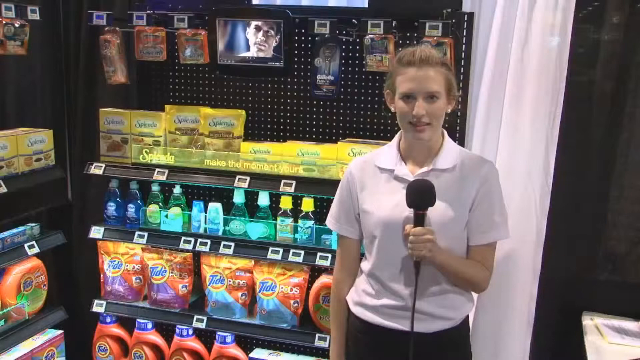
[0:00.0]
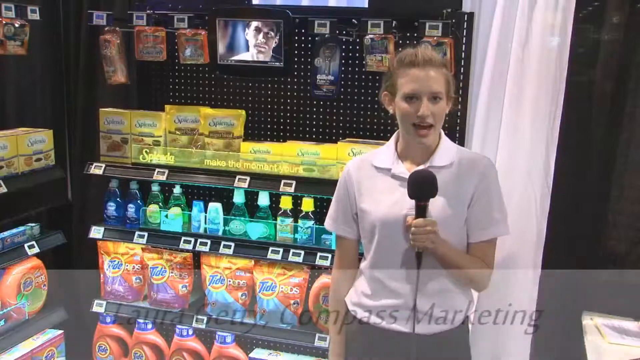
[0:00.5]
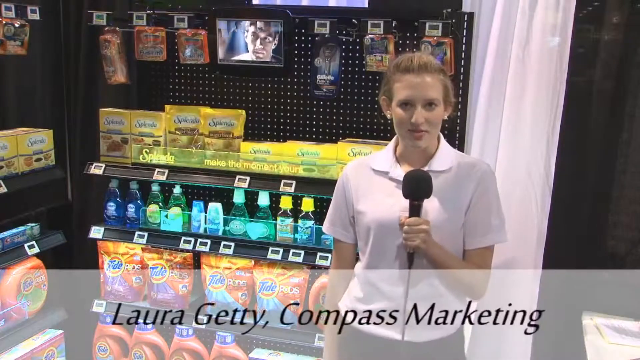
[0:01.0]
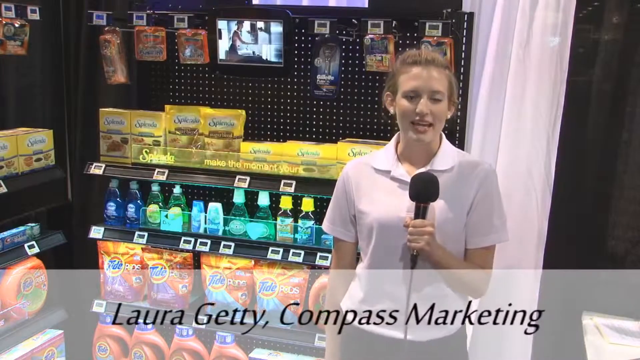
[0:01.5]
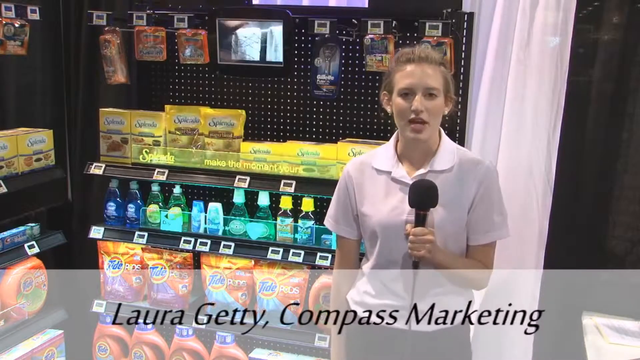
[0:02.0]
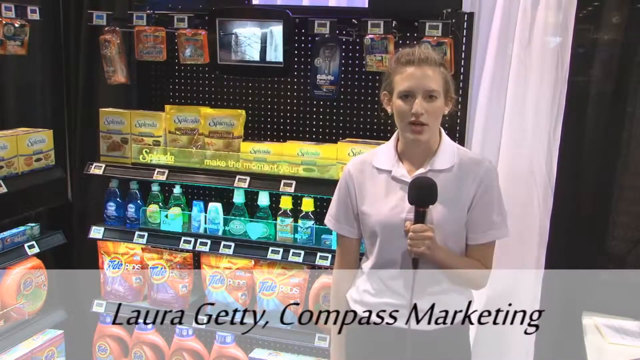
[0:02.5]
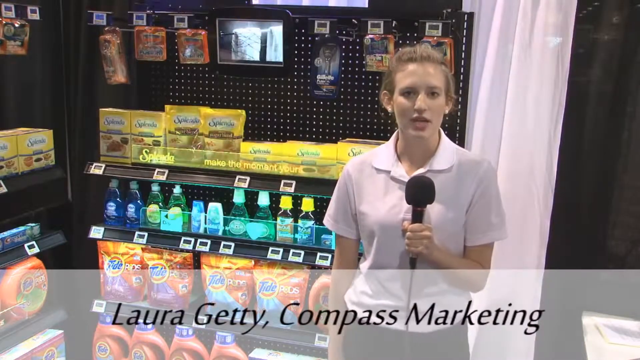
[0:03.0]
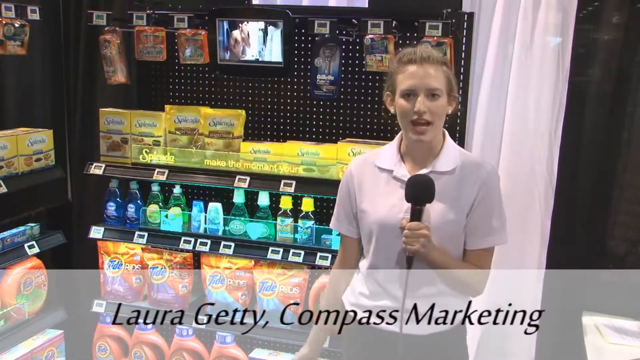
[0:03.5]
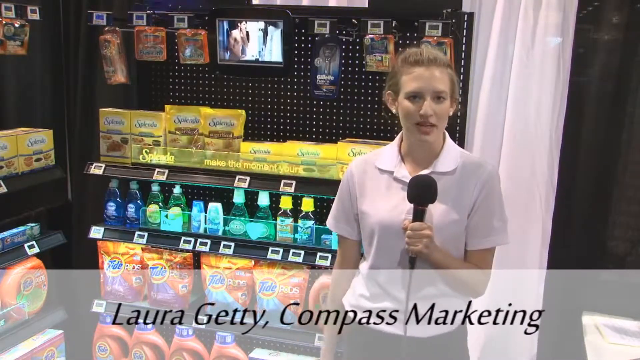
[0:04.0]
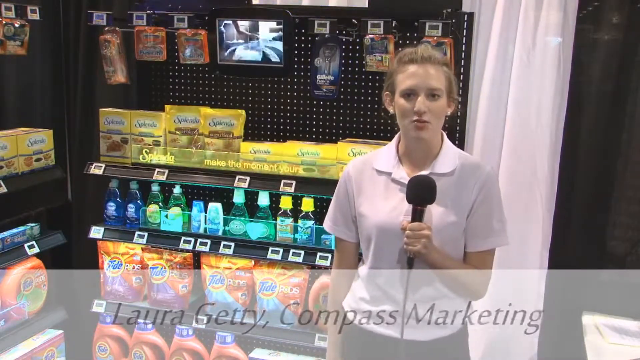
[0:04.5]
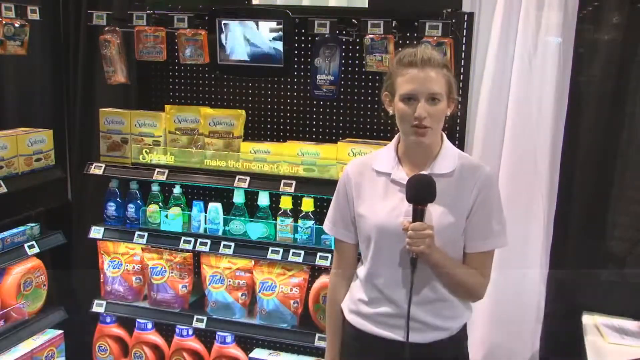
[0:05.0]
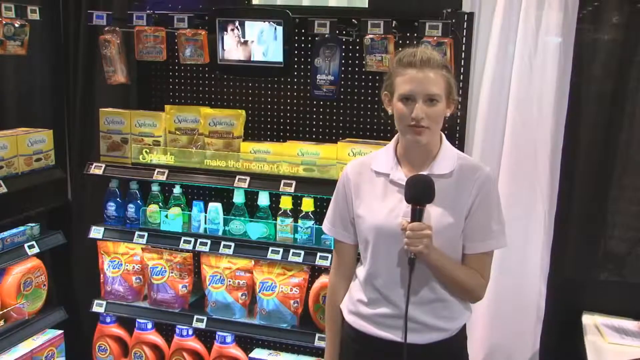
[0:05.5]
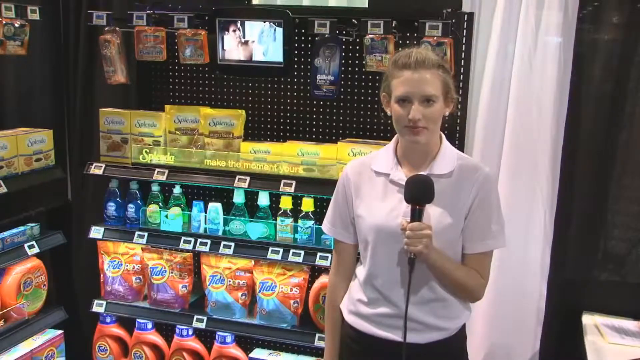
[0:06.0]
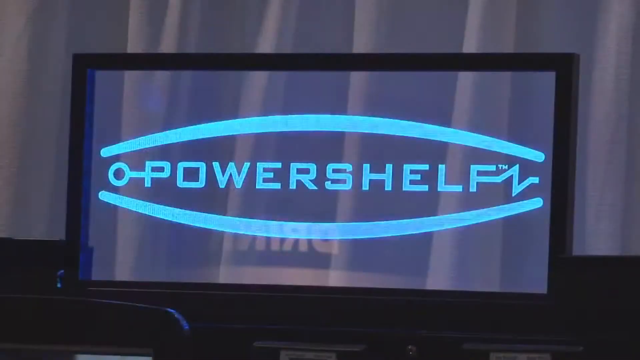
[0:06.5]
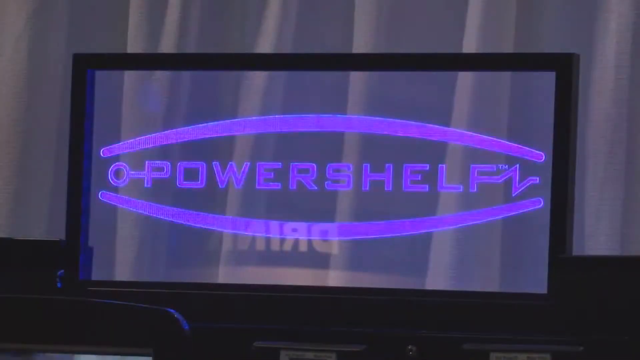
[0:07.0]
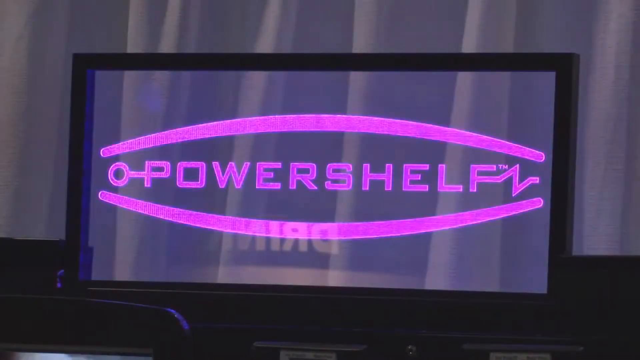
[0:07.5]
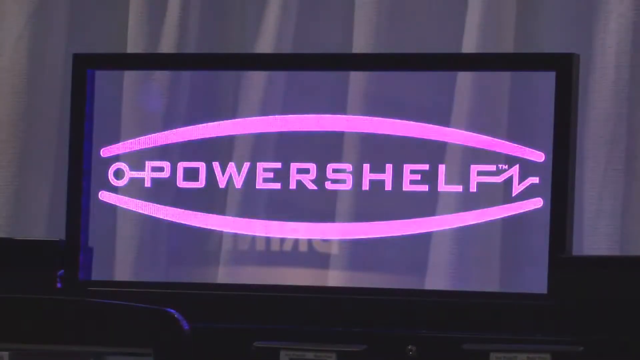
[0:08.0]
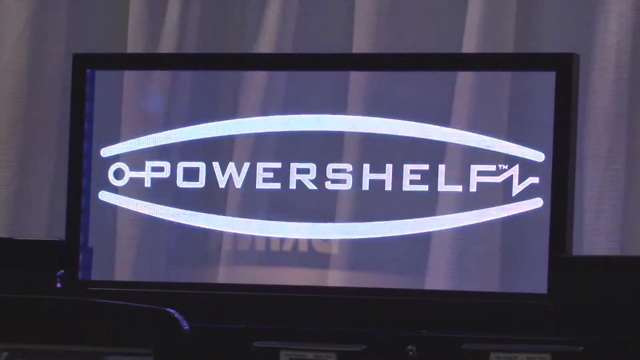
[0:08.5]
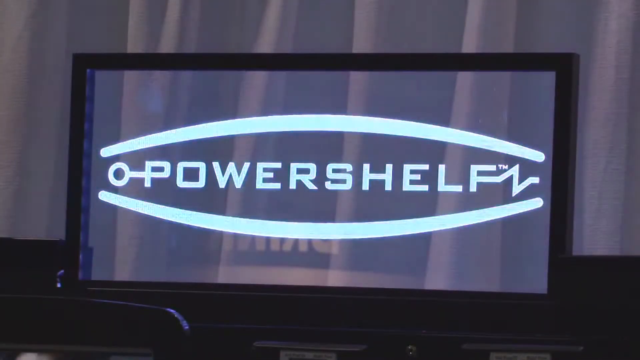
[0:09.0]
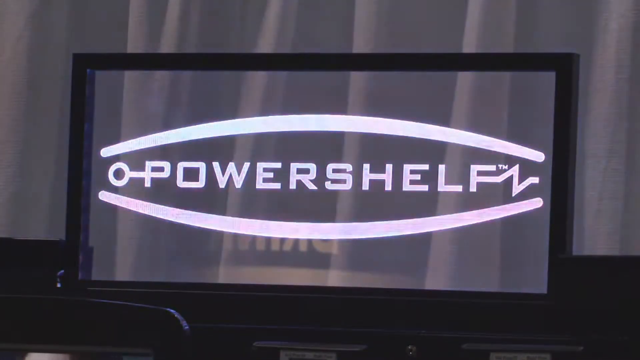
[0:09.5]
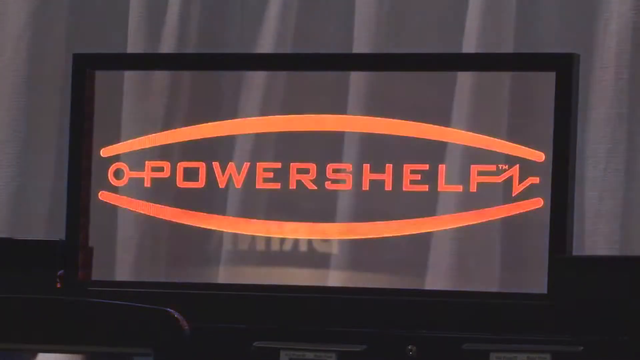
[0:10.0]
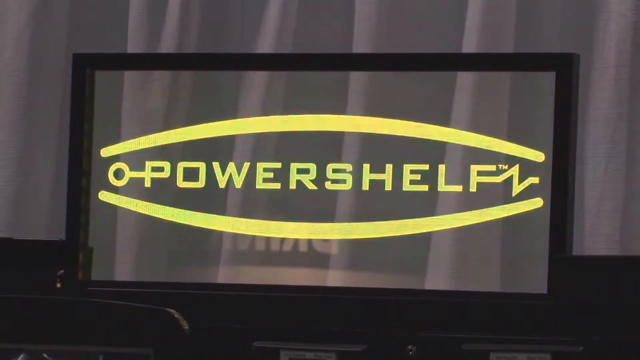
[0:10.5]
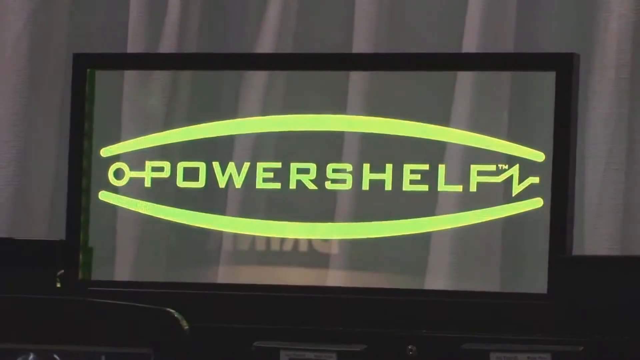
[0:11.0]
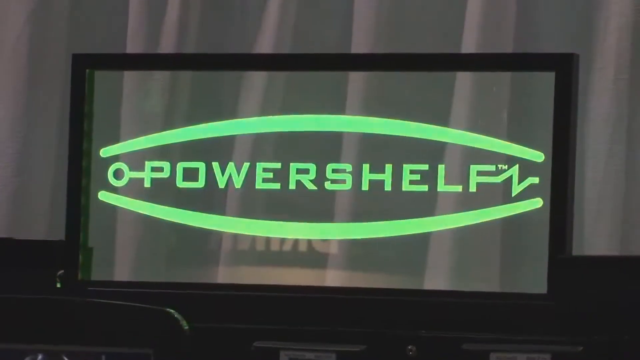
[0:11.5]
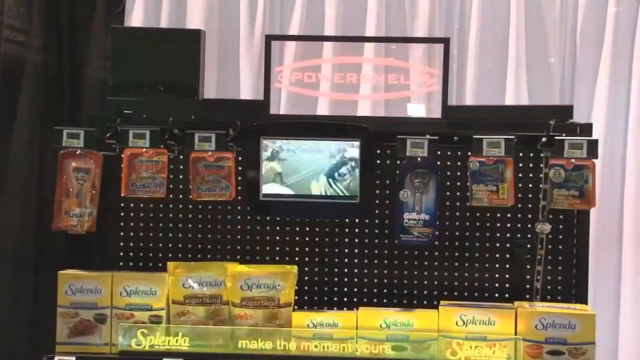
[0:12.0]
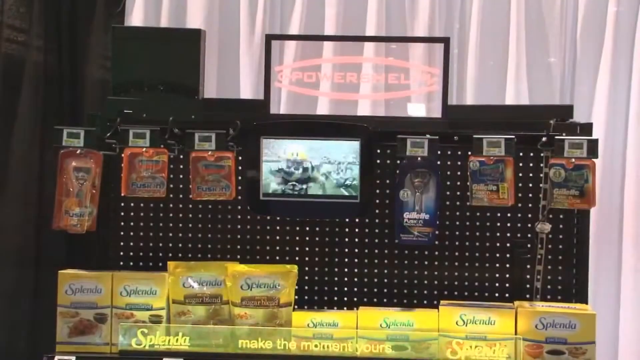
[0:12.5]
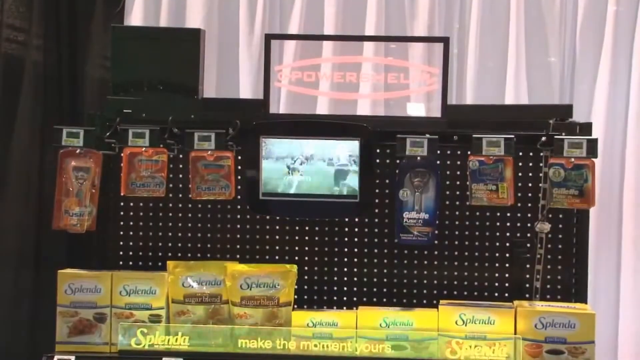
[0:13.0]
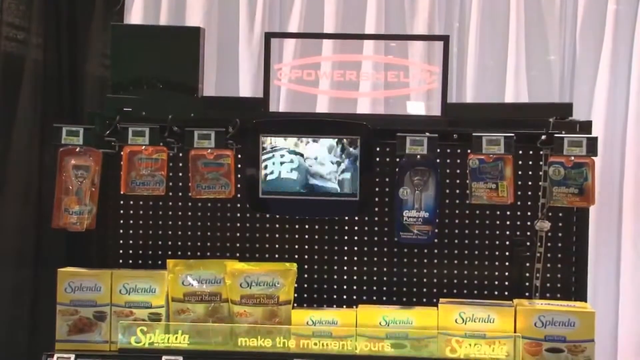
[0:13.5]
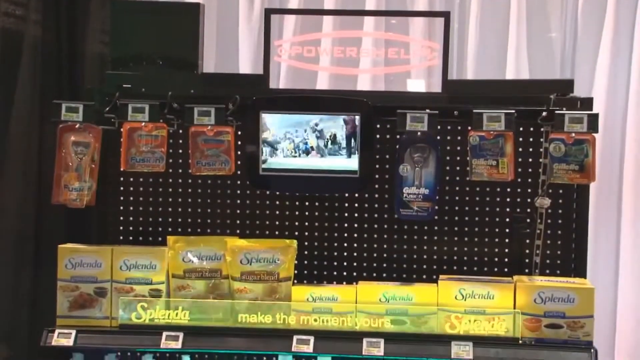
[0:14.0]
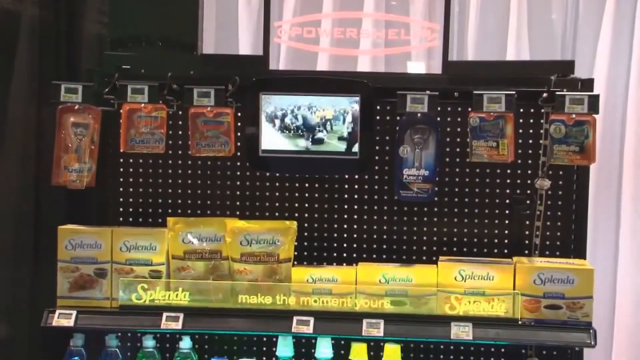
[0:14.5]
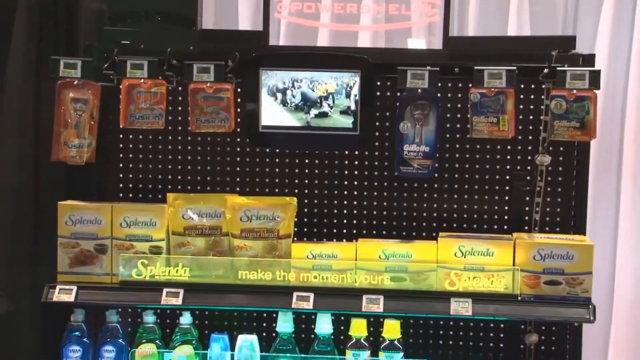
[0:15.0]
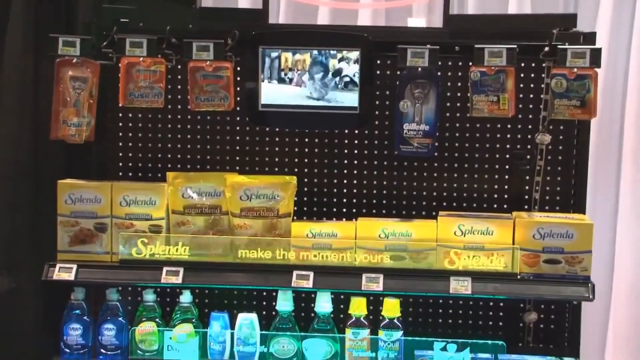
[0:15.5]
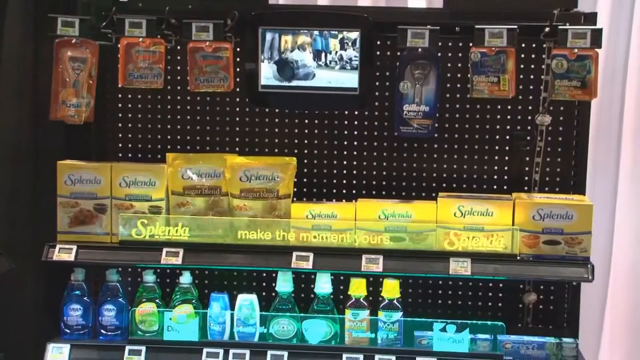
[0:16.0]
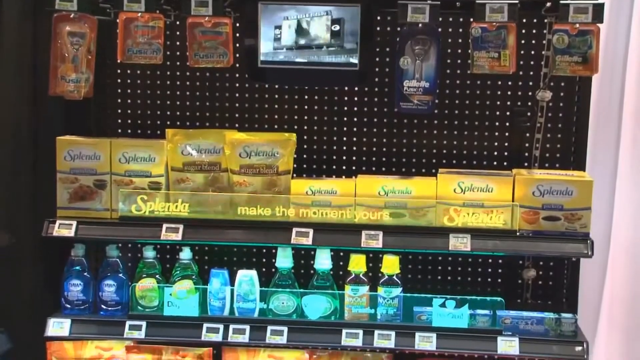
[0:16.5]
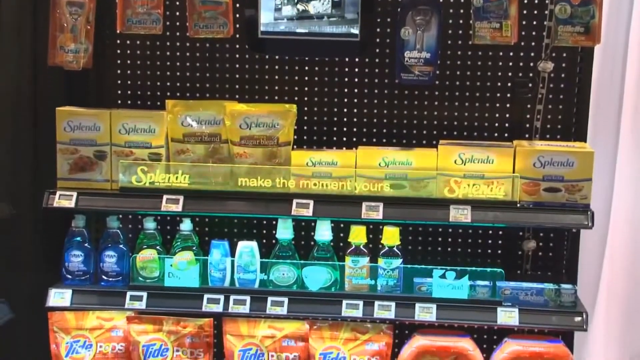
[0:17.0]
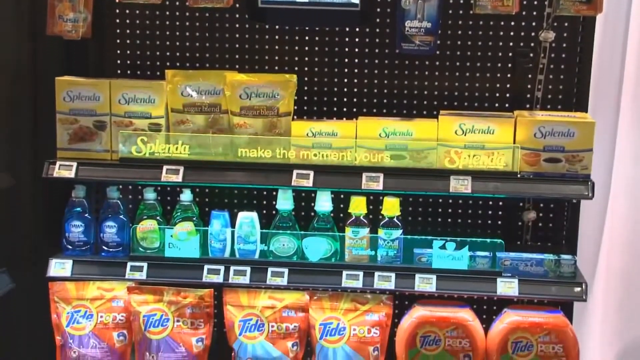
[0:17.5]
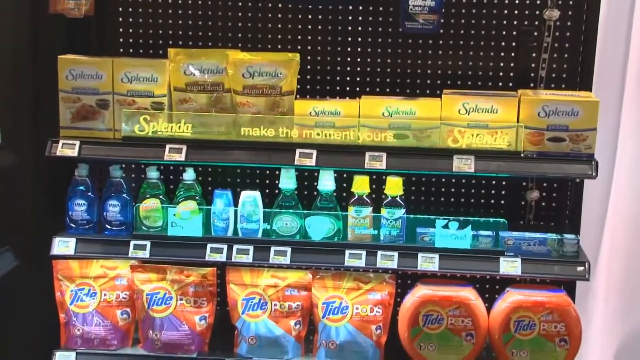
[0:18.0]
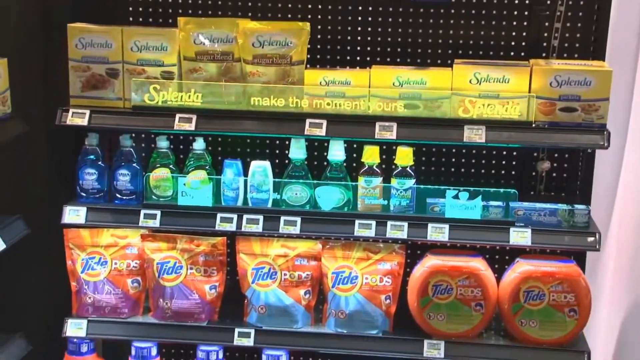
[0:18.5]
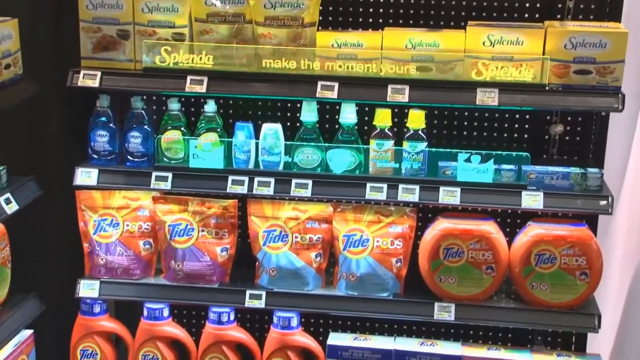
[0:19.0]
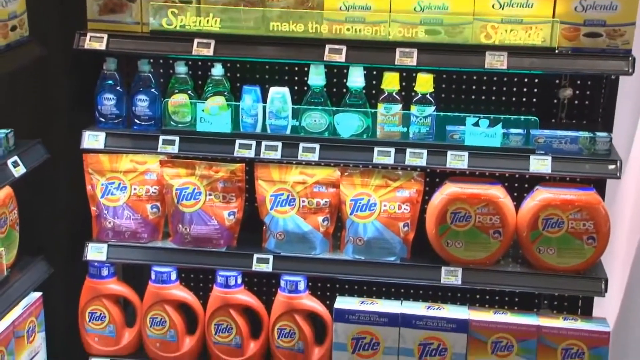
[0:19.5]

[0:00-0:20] What appears to be a very low-budget commercial for a particular item opens with a woman standing, looking somewhat like a news anchor, in front of what looks like shelves set up somewhere that isn't a store, possibly as part of a convention or something similar. She stands toward the right side, holding a large microphone right under her head, and talks directly to the camera in a casual way. She moves her right hand casually toward her right side and then back to her side, and she looks almost bored. The video then cuts to an image of a black frame with some glass in the middle. On the glass it says "Power Shelf", and the glass where the name appears changes color: it turns pink, goes back to a roughly clear color, then transitions through more colors including orange, and then to a green-yellow color.